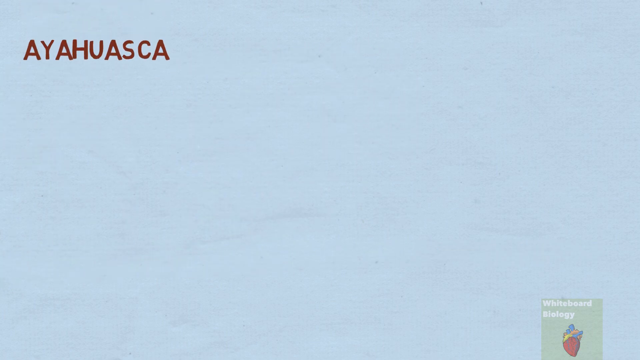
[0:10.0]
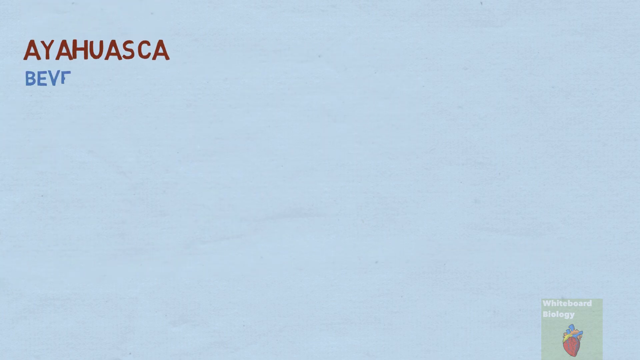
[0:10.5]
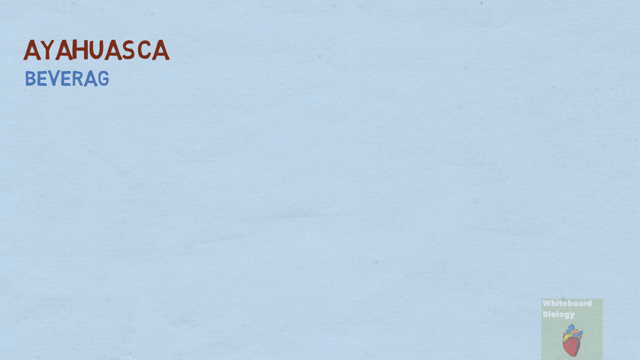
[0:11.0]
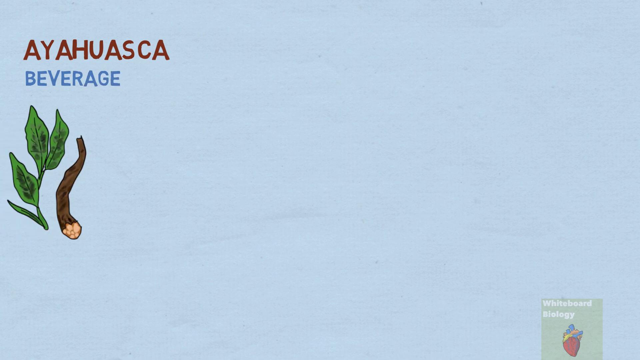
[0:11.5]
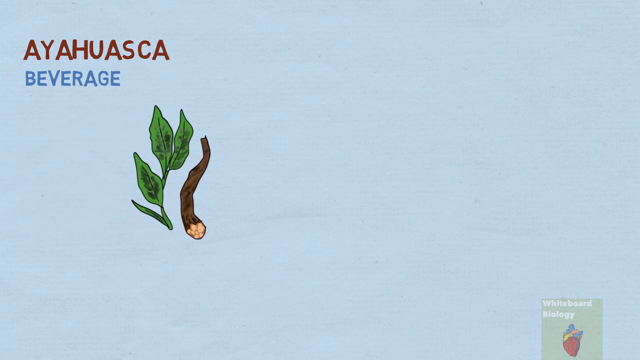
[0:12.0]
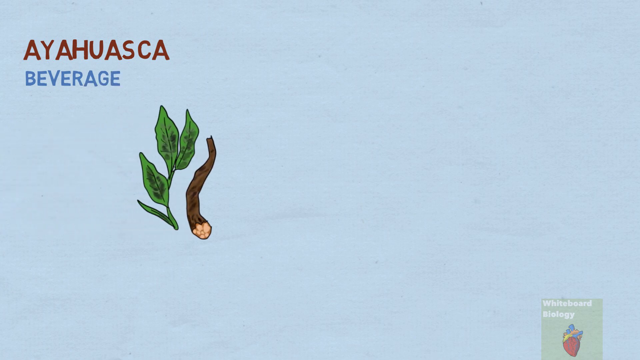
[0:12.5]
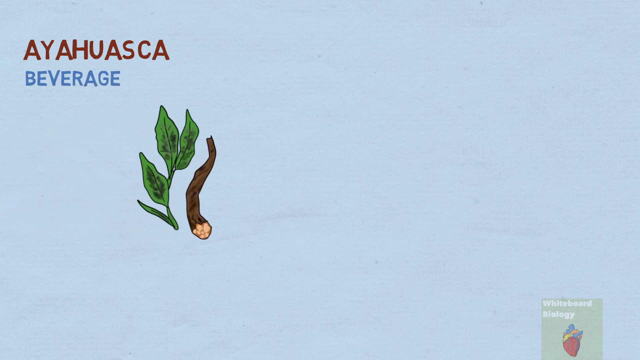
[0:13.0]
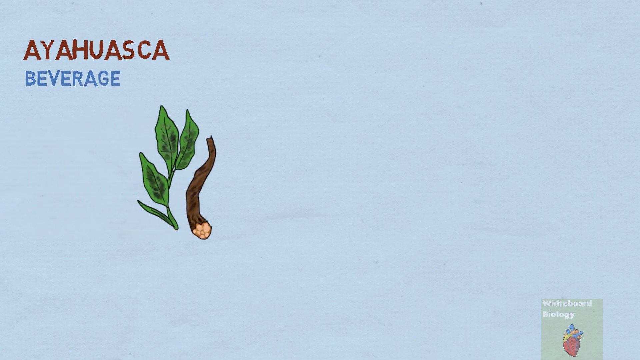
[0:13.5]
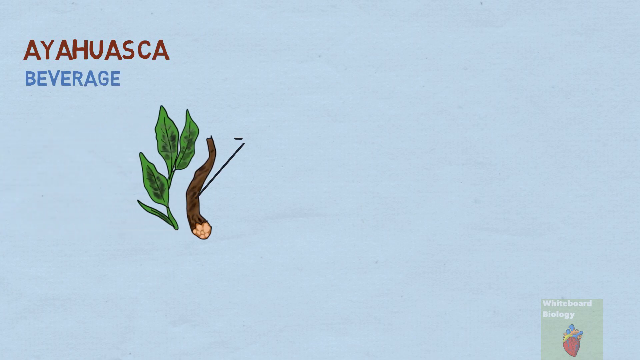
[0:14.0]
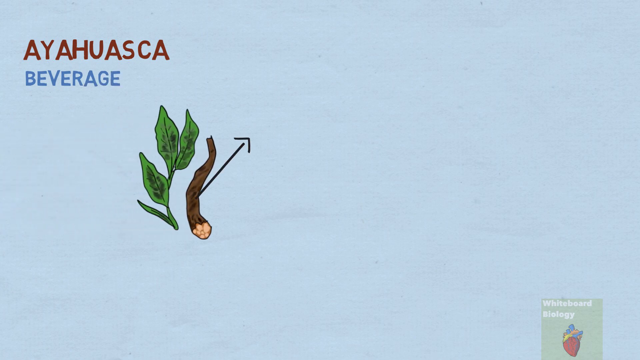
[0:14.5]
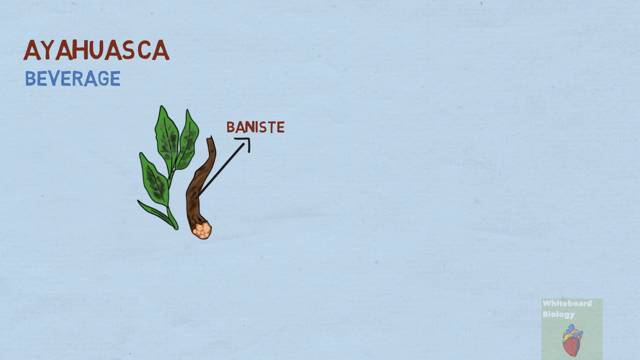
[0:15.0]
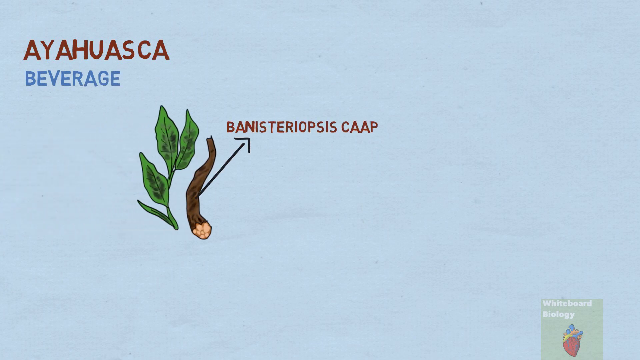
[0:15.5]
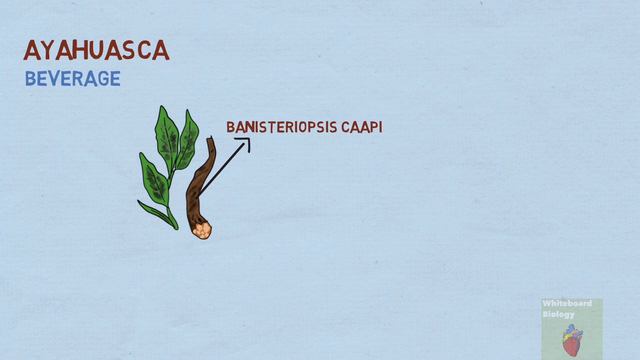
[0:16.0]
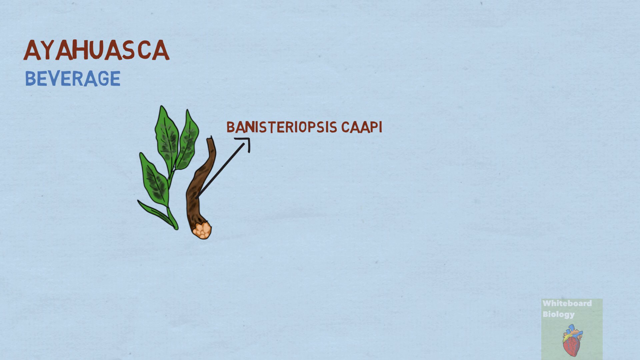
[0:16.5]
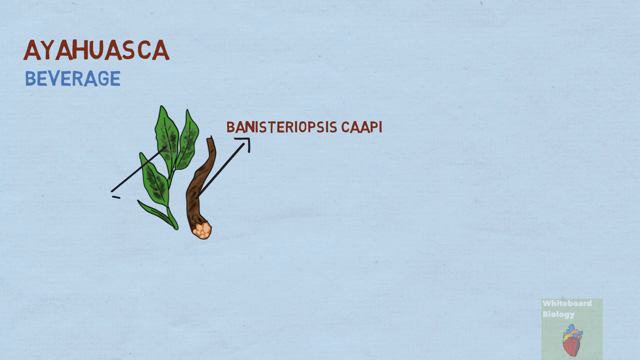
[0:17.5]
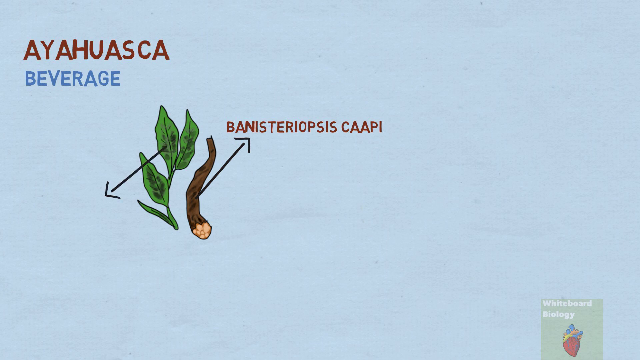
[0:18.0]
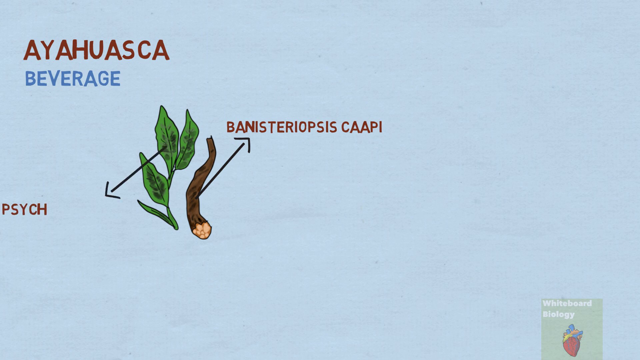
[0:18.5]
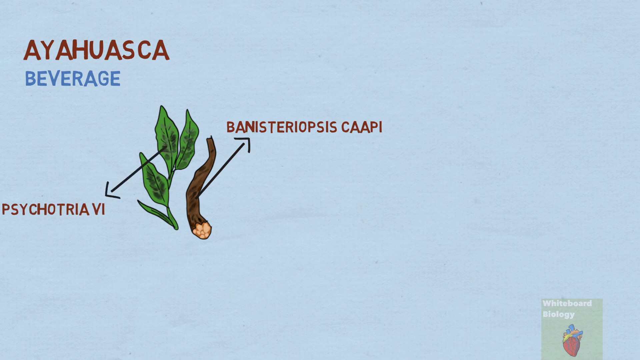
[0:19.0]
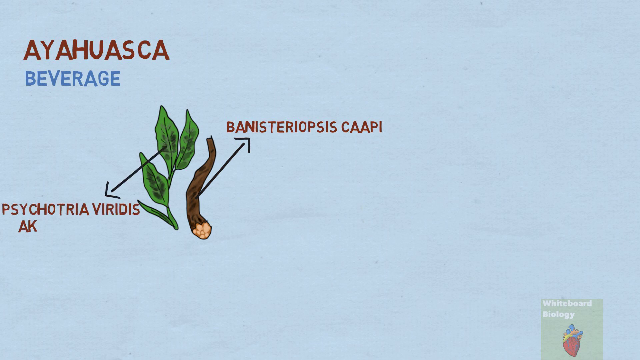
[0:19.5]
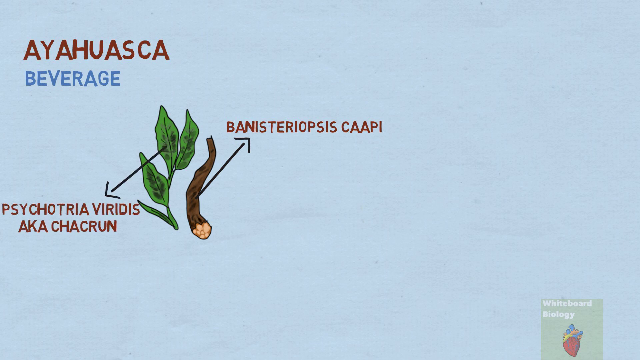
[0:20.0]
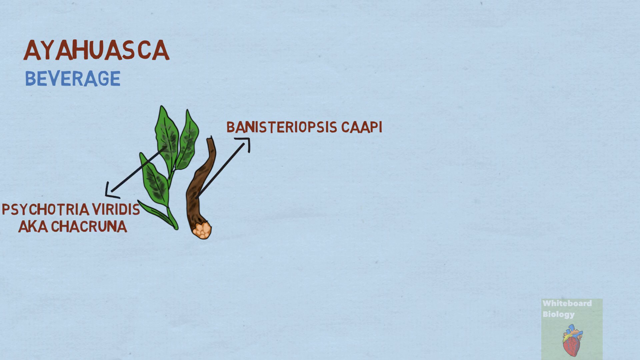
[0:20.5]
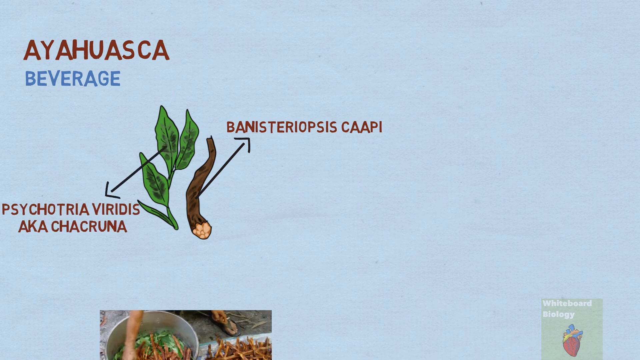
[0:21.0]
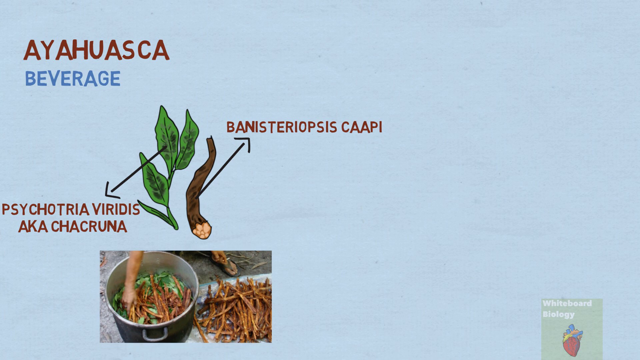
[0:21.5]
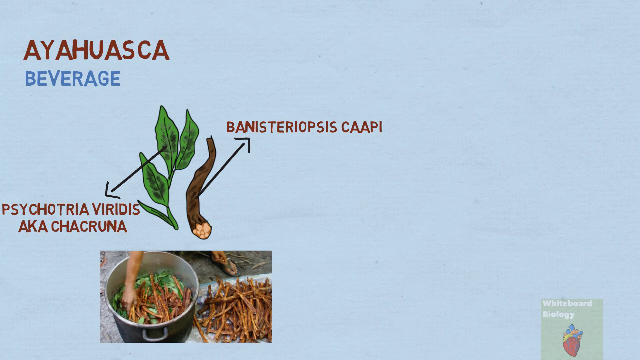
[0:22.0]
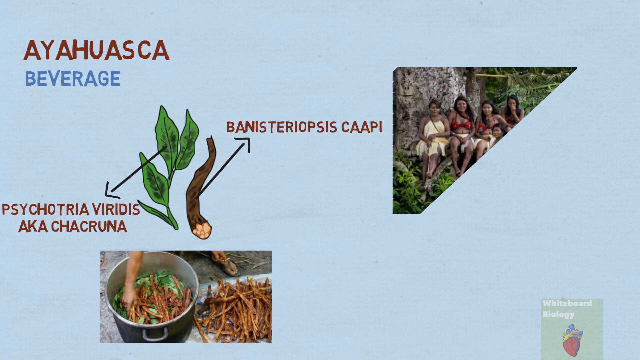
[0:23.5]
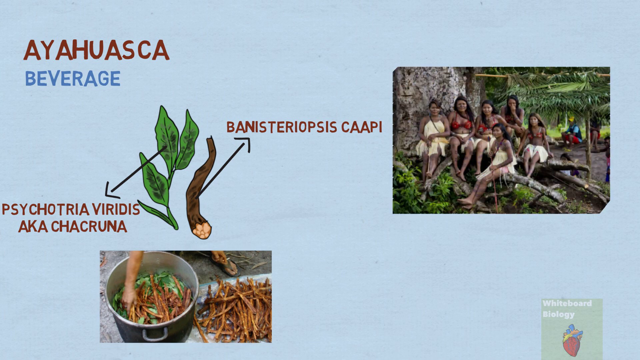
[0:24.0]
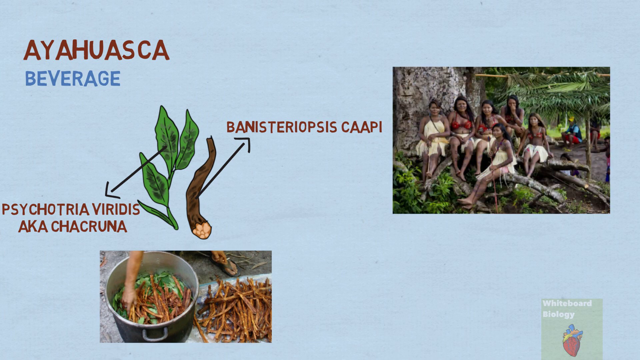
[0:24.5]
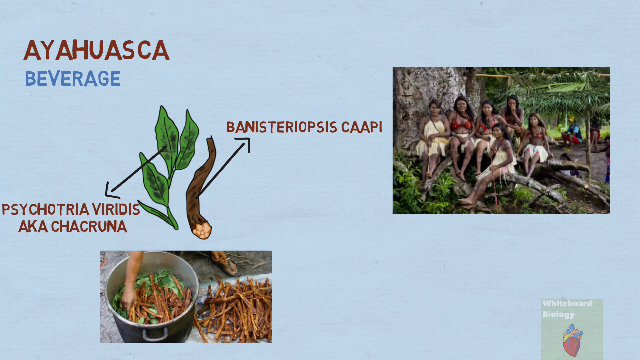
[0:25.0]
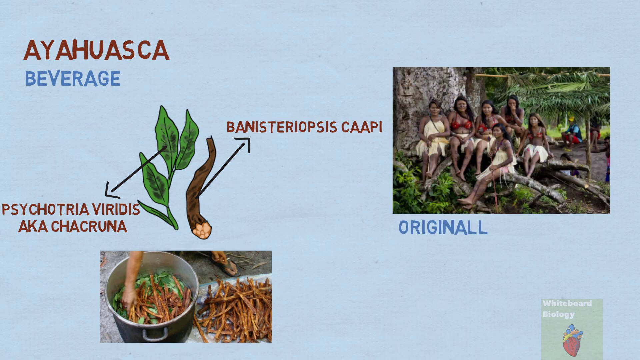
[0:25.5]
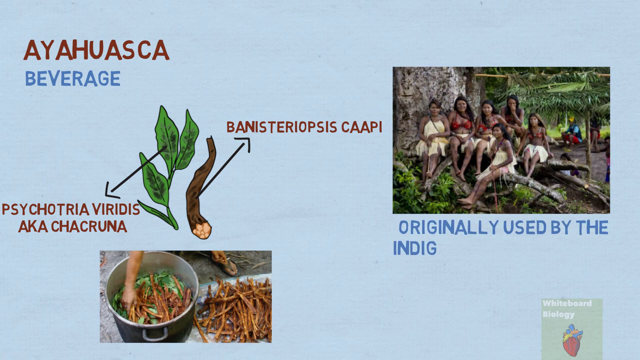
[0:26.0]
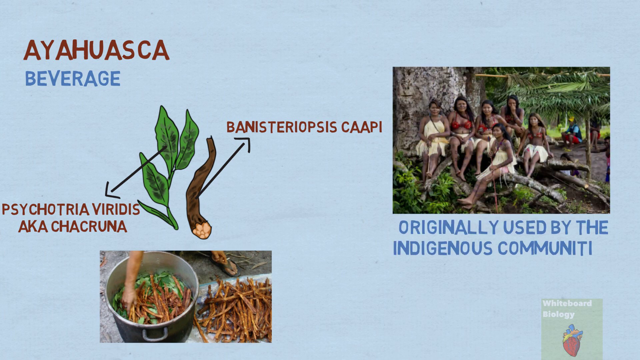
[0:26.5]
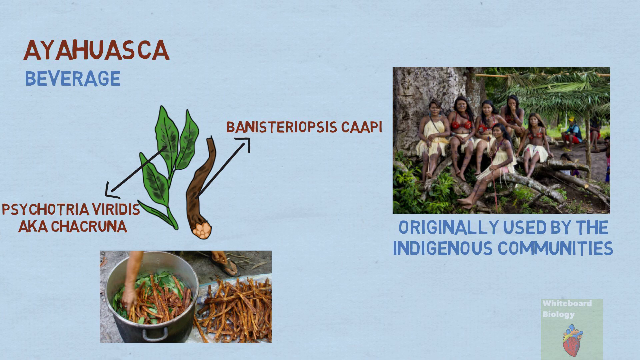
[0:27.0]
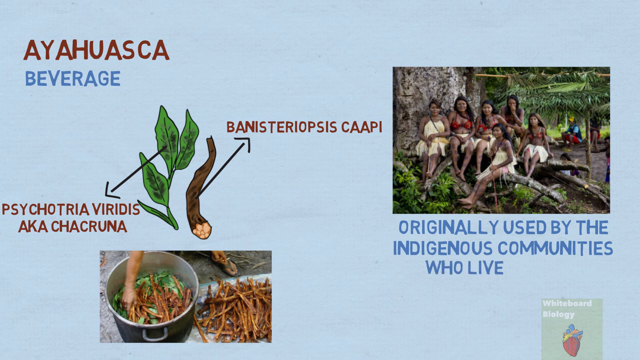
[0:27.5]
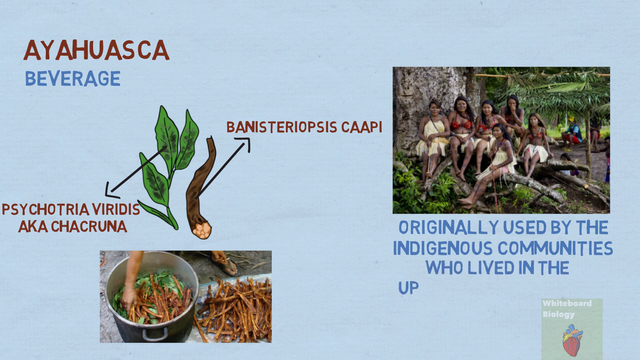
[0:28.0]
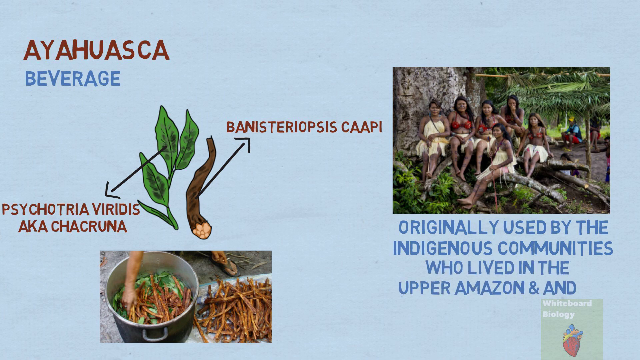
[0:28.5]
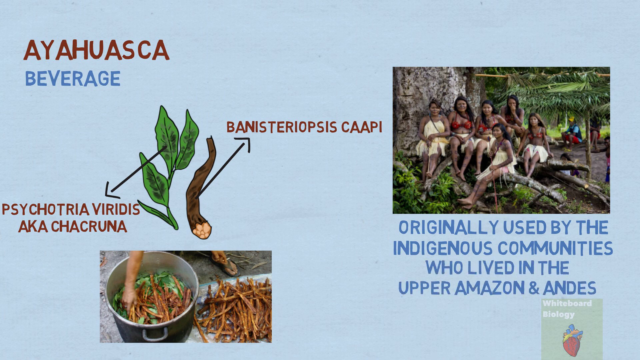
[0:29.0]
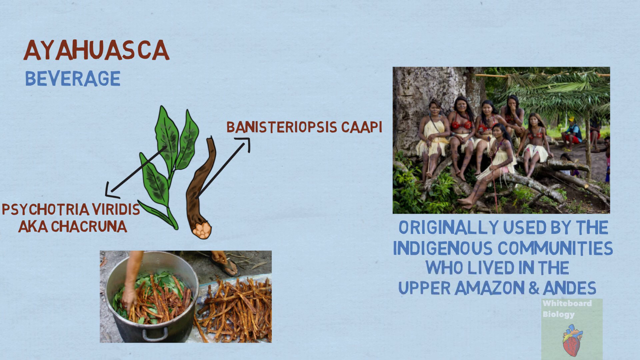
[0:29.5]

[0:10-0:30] A leaf and a tree are shown, along with a combination of leaf and root that appear to be cooked together like an herb. A female is sitting on a tree branch, and someone is putting on a bra.